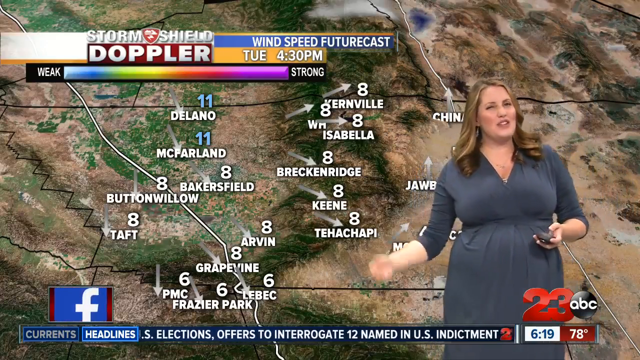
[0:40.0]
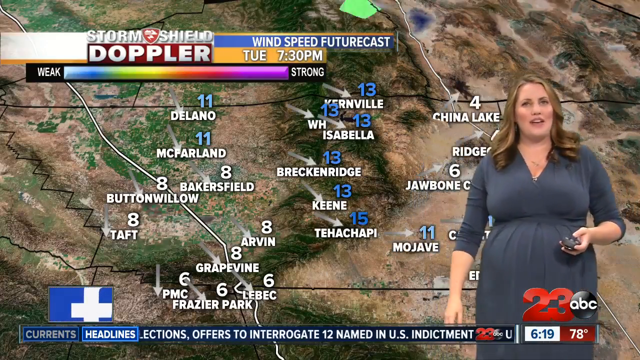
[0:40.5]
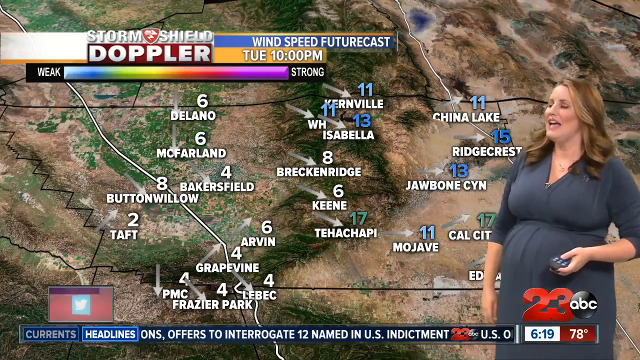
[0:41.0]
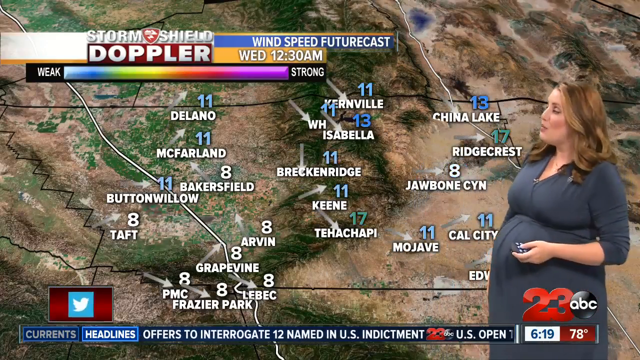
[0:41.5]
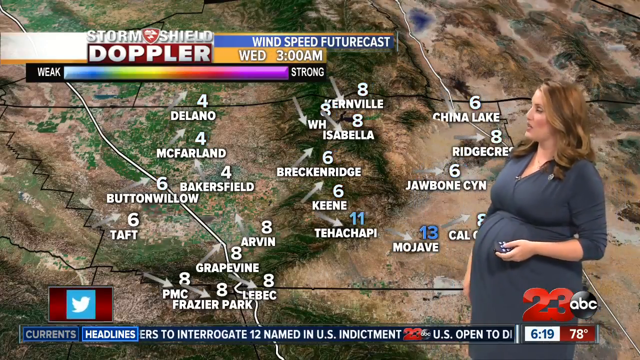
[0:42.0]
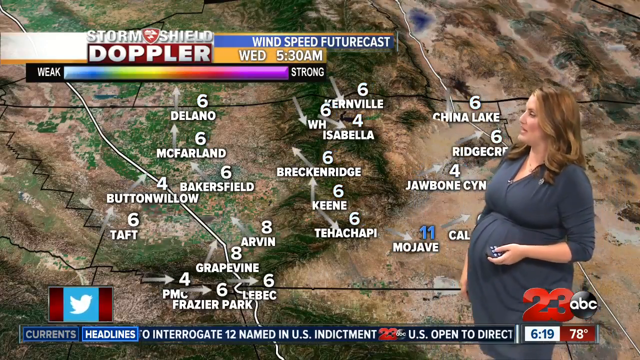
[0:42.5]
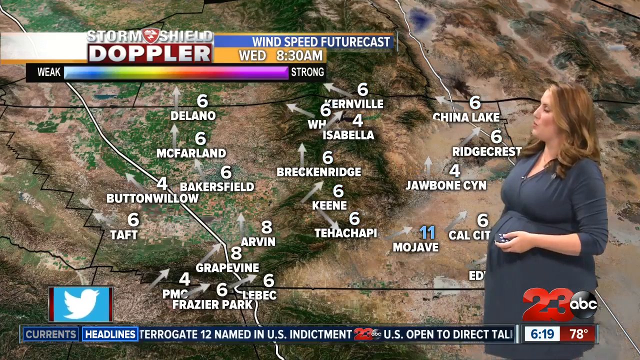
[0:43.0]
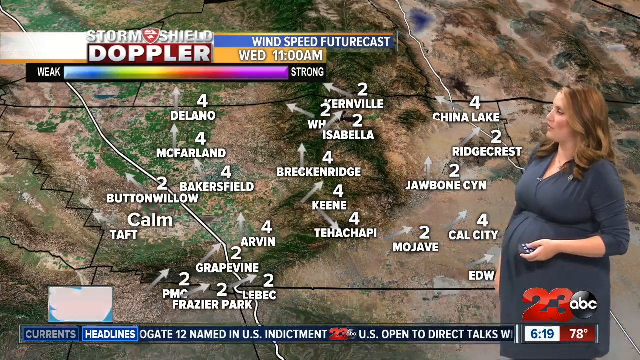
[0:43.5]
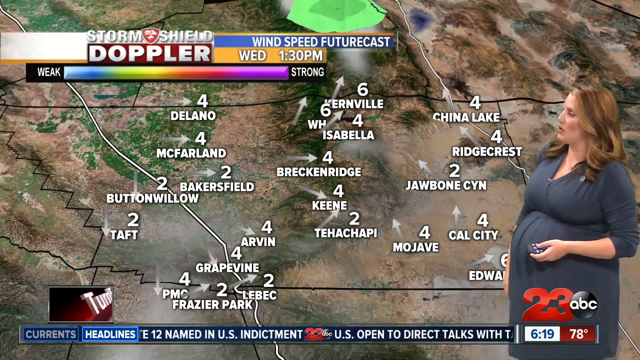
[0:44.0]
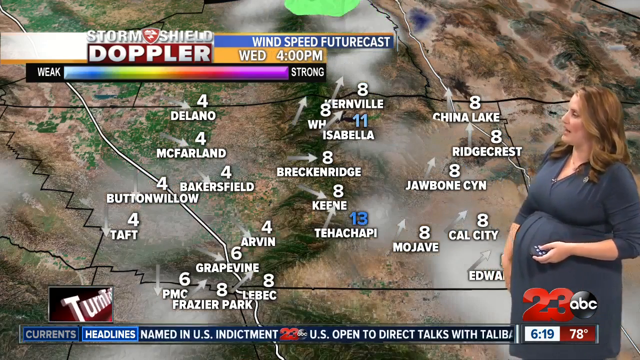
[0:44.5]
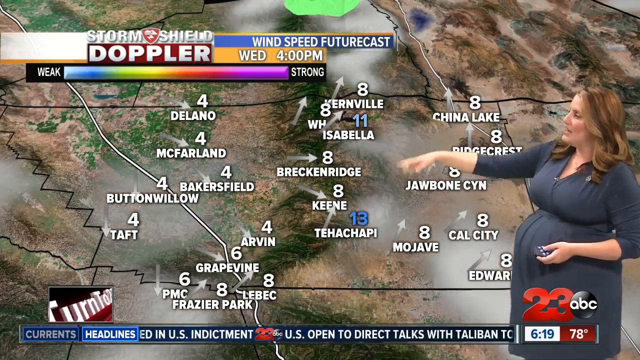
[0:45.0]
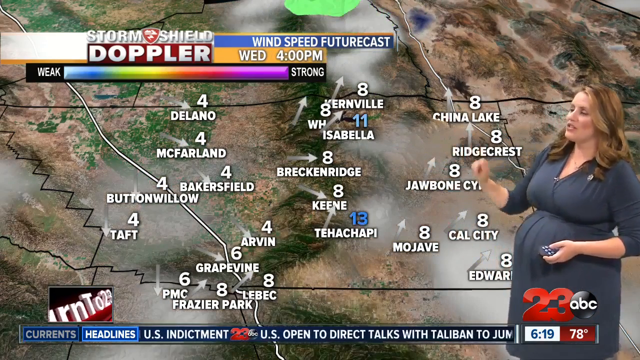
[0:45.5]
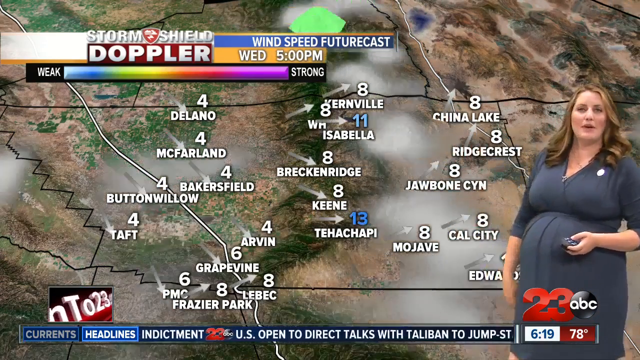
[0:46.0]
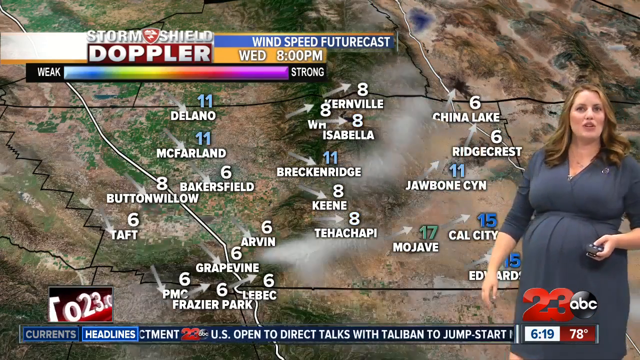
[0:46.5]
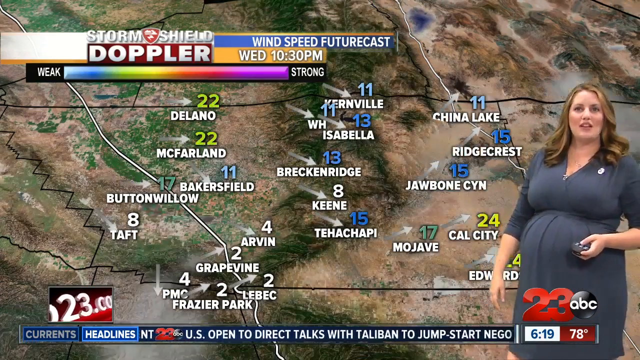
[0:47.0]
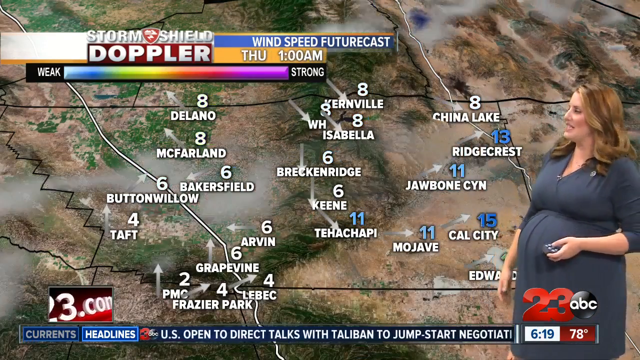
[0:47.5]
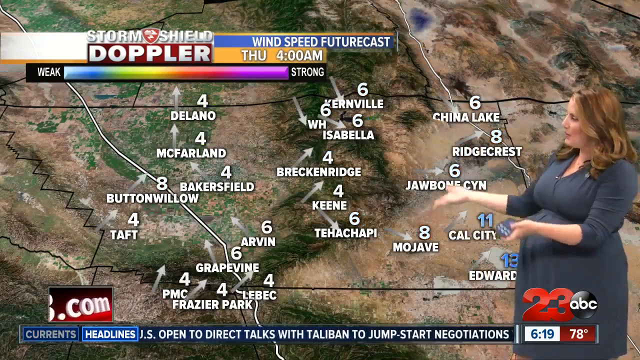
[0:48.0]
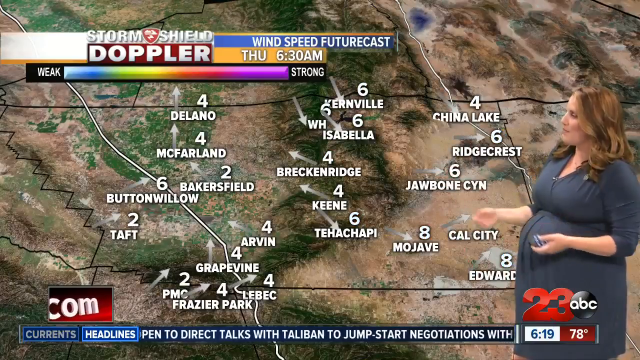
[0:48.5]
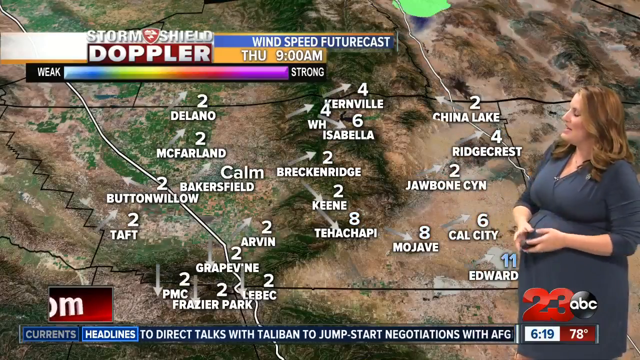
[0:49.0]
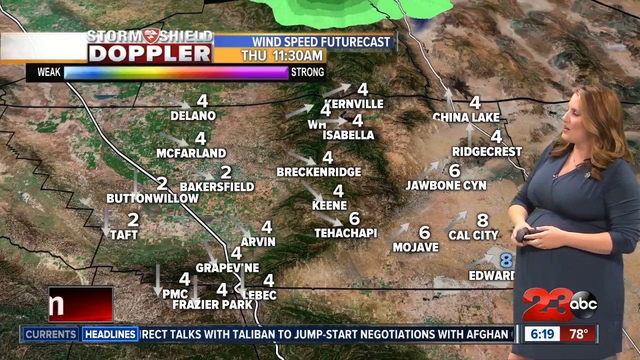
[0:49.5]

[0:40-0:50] A "Storm Shield Doppler wind speed futurecast" map reads "Tuesday 4:30 p.m." with a weak-to-strong scale. Colors on the map show intensity, and the map shows the progression of wind speeds and directions. The 23 ABC News reporter, a woman in a blue dress who seems somewhat big, presents the futurecast while holding a remote control in her hand.